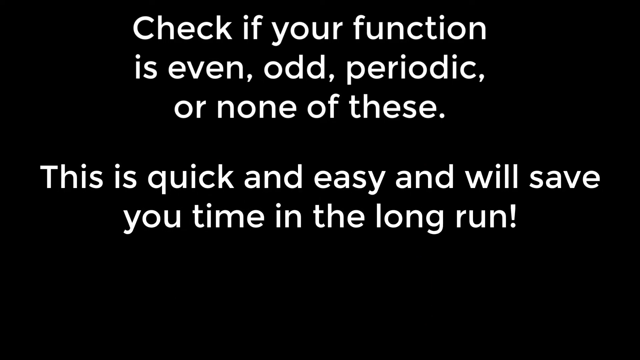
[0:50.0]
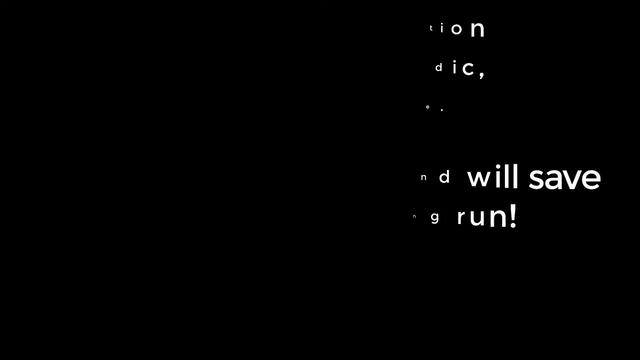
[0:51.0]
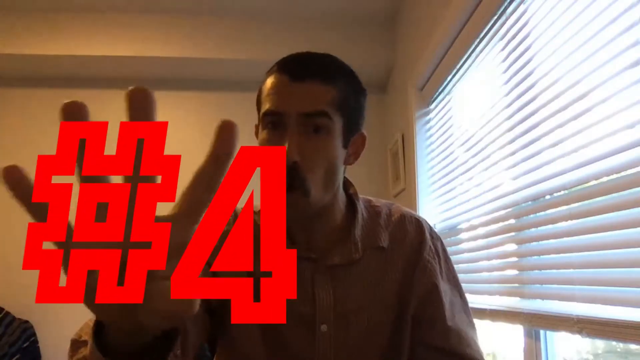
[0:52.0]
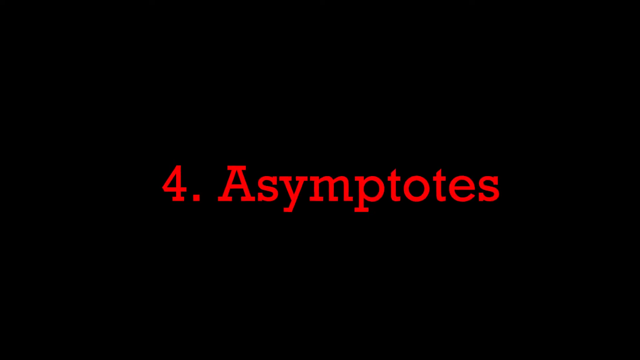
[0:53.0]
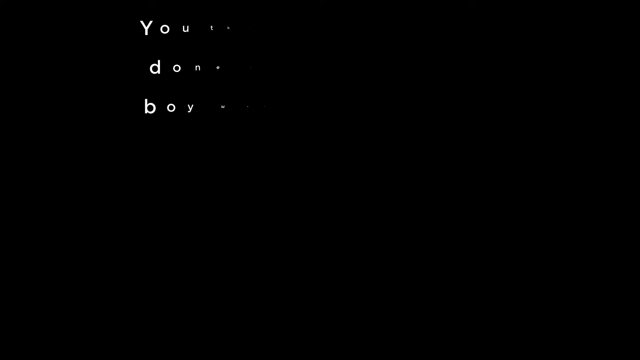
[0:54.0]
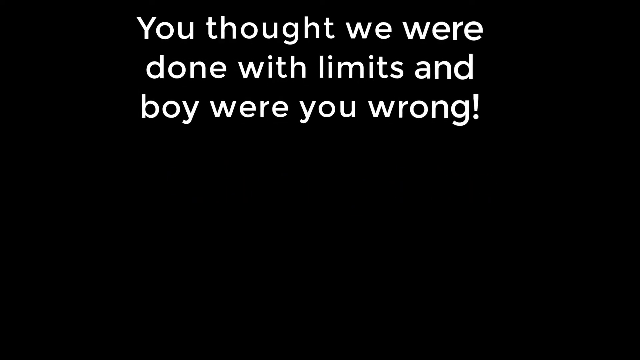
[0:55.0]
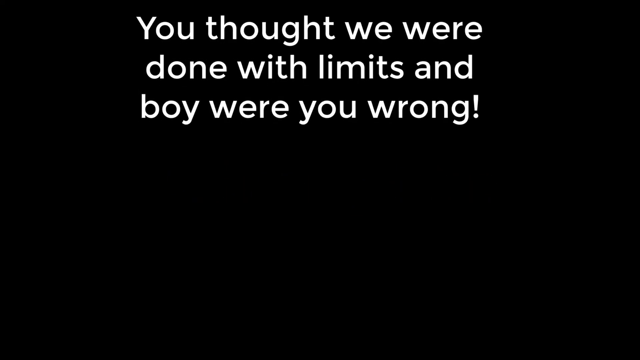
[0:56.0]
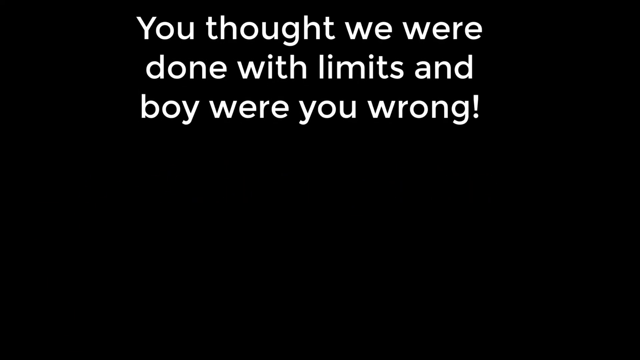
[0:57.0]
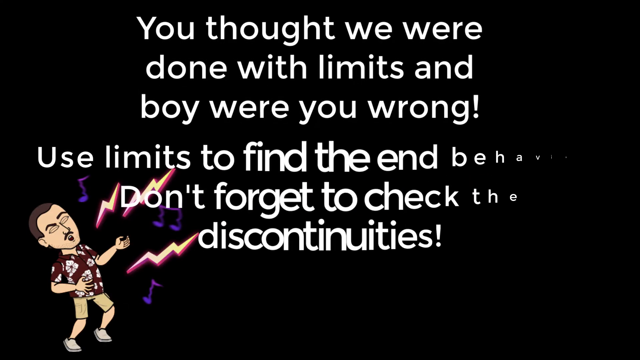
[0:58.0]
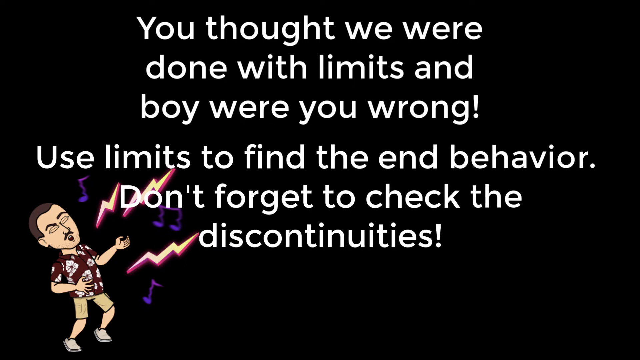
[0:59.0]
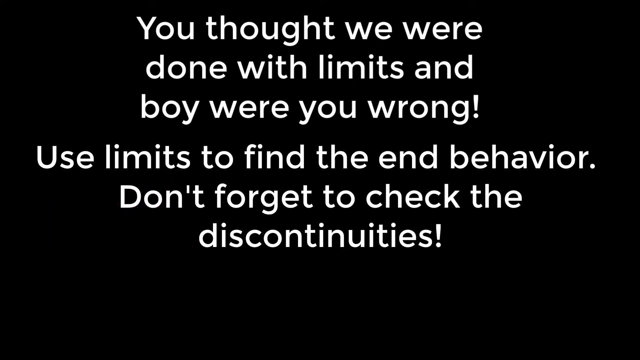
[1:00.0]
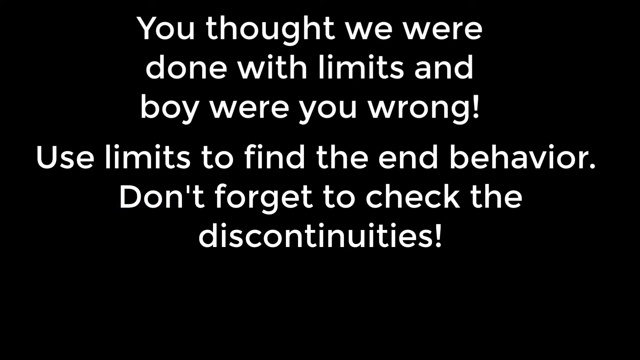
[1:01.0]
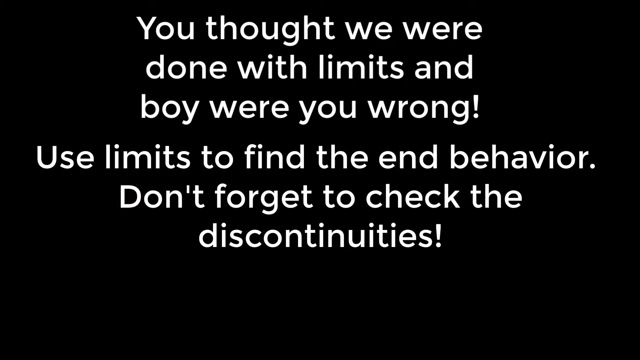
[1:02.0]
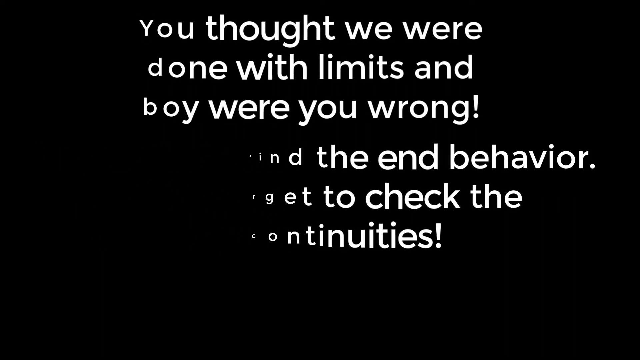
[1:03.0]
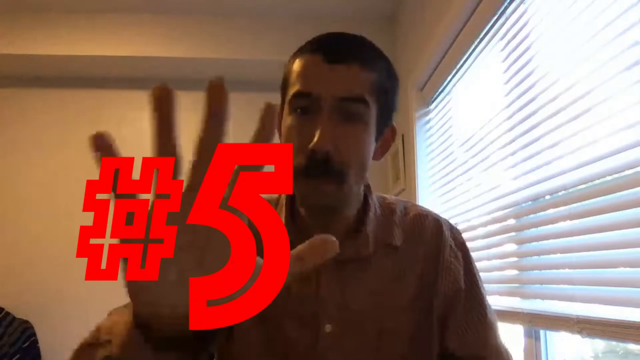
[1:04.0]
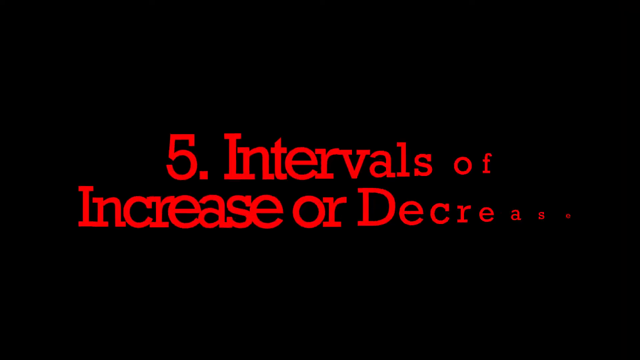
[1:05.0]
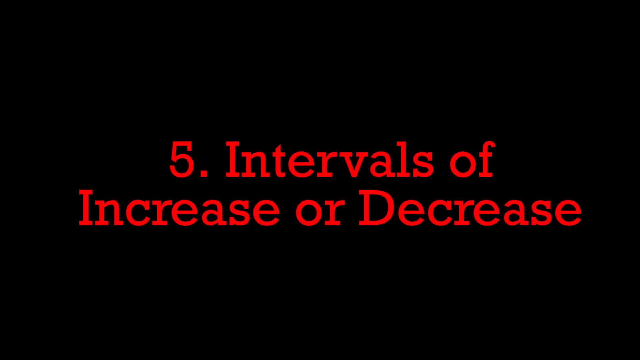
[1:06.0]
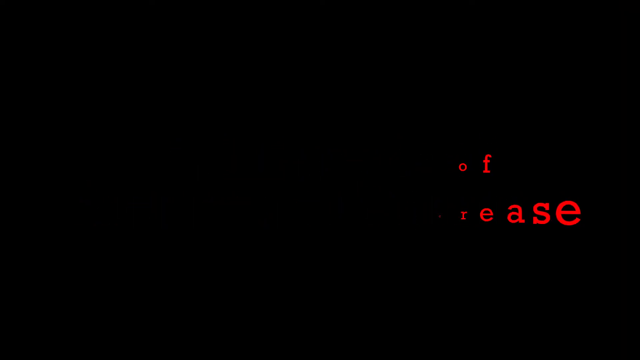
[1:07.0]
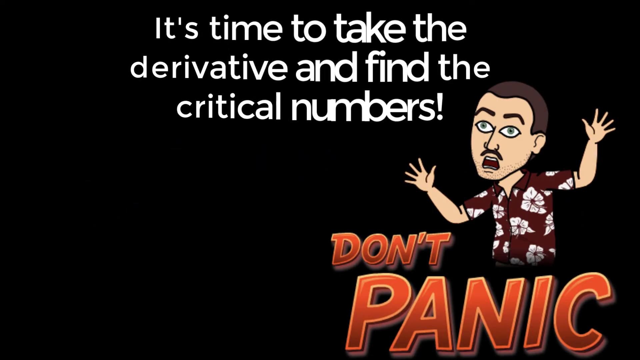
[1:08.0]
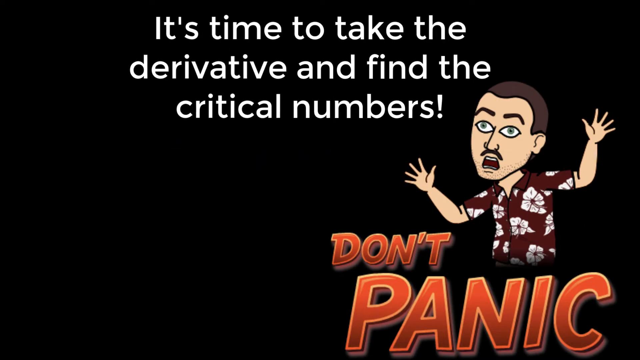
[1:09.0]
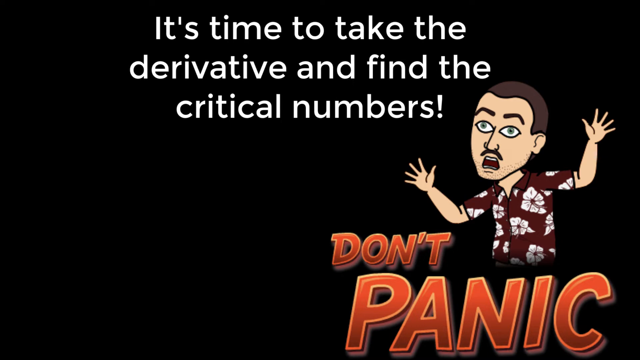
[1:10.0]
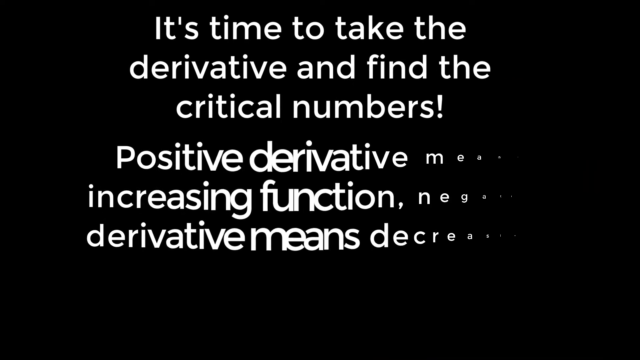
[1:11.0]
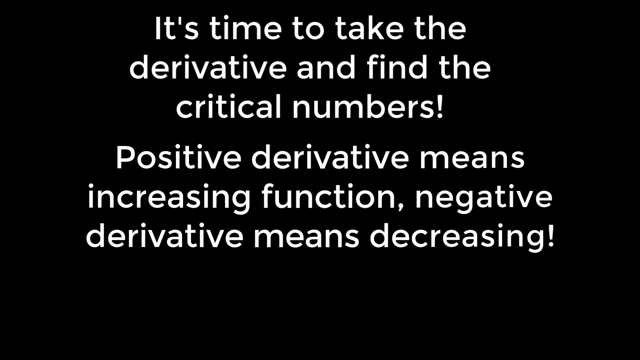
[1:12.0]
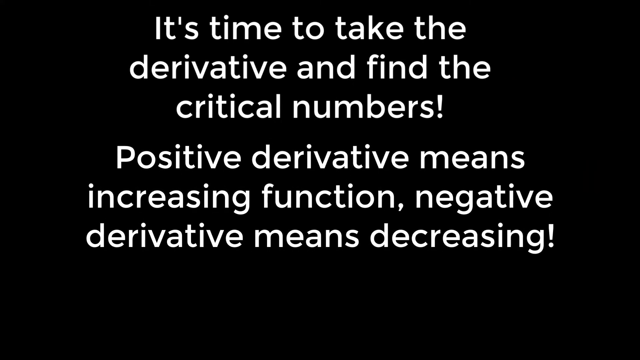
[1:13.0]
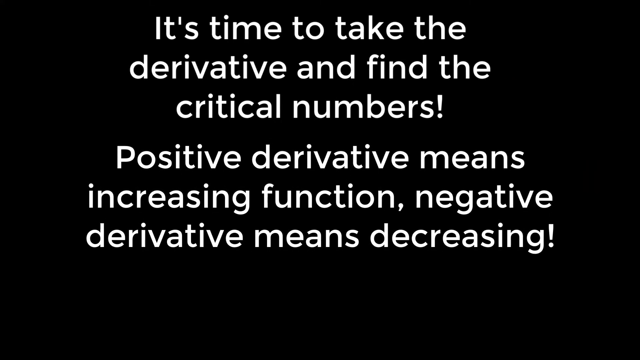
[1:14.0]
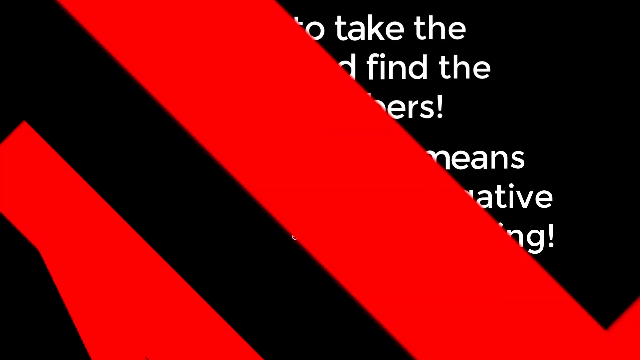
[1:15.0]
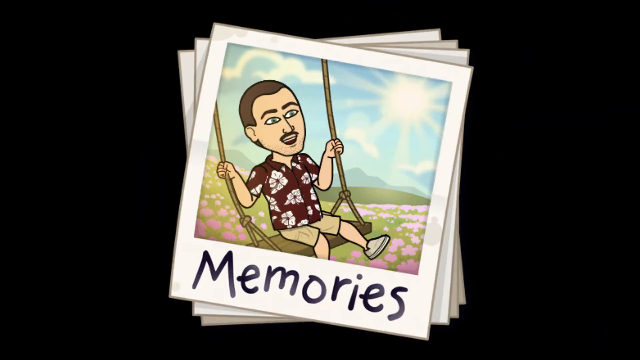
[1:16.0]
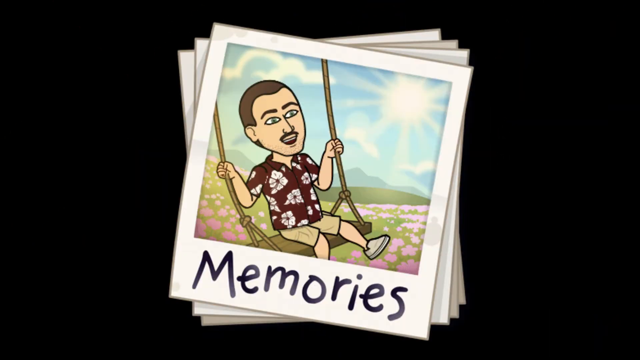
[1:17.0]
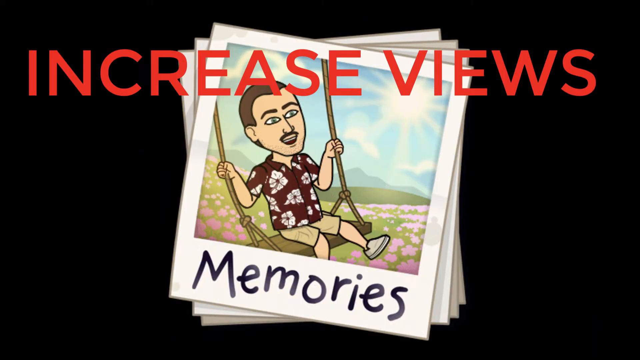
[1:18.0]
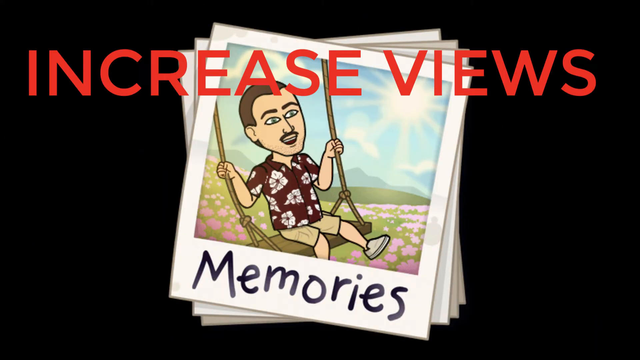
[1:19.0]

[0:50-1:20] The man in a collared shirt with a brown mustache and brown hair appears, and a red number 4 shows up at the bottom left as he holds out four fingers. A black background then says "4. Asymptotes." That is replaced by a sentence at the top: "you thought we were done with limits and boy, were you wrong." In the bottom left, a cartoonish figure in a Hawaiian shirt and khaki shorts, with brown hair and a brown mustache, plays air guitar as lightning bolts and music signs come out of him. The text then says "use limits to find the end behavior. Don't forget to check the discontinuities." The cartoon figure disappears. The scene changes to the man with the collared shirt, brown mustache and brown hair sitting in a room; a red number 5 appears in the bottom left as he holds out five fingers. A black background shows "5. intervals of increase or decrease." That is replaced by a scene with a cartoon man in a Hawaiian shirt, with a brown mustache and brown hair, raising his arms in shock, with "don't panic" below him. At the top a sentence forms: "it's time to take the derivative and find the critical numbers." The cartoon disappears and a new sentence appears: "positive derivative means increase function. Negative derivative means decreasing." That sentence disappears, and the word "wild" appears on screen in red. Then a picture shows the cartoon man in a Hawaiian shirt and khaki shorts, with brown hair and a brown mustache, swinging on a swing in a field, with "memories" below it. Red words at the top of the background then say "increased views."